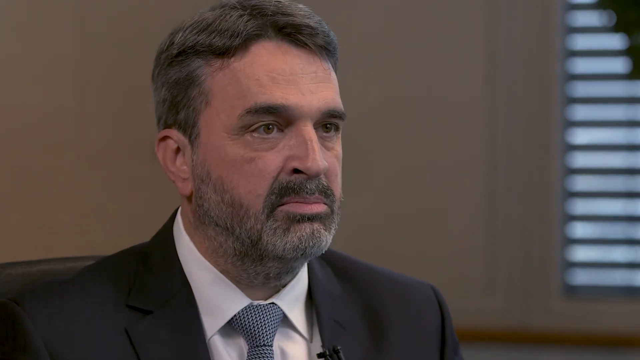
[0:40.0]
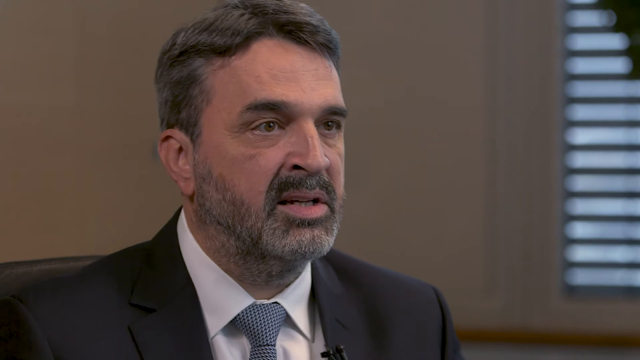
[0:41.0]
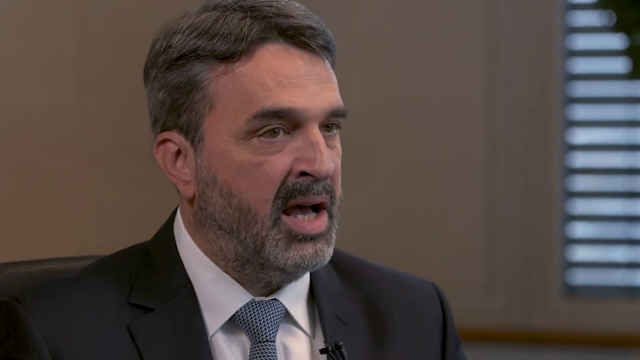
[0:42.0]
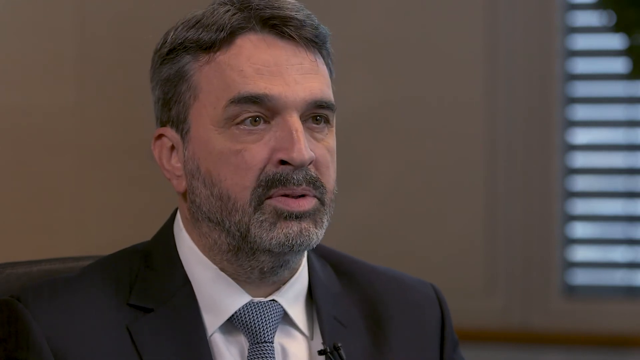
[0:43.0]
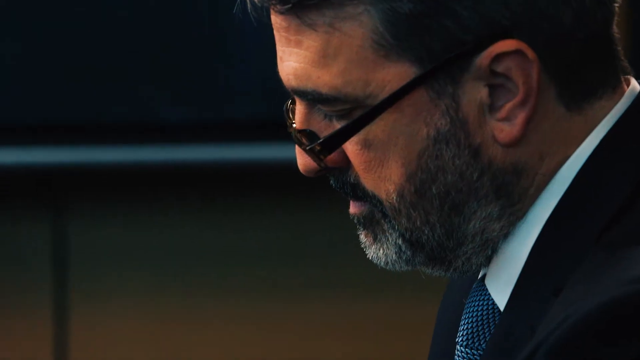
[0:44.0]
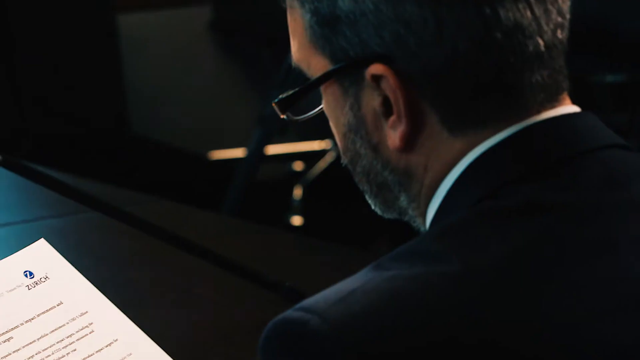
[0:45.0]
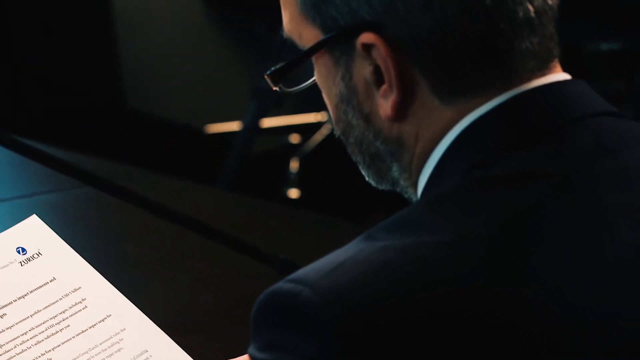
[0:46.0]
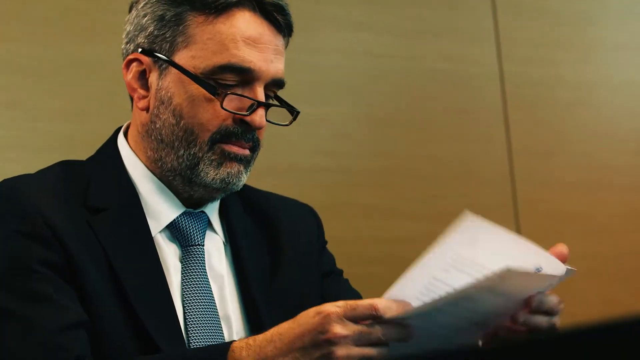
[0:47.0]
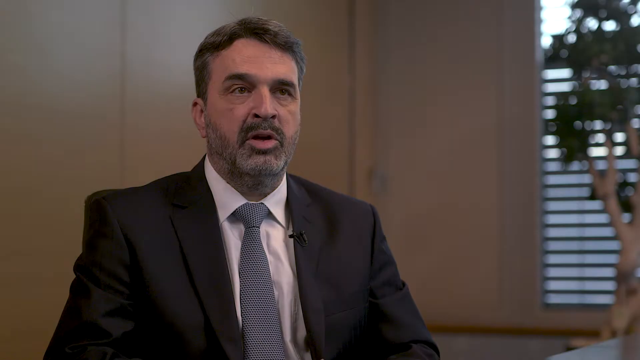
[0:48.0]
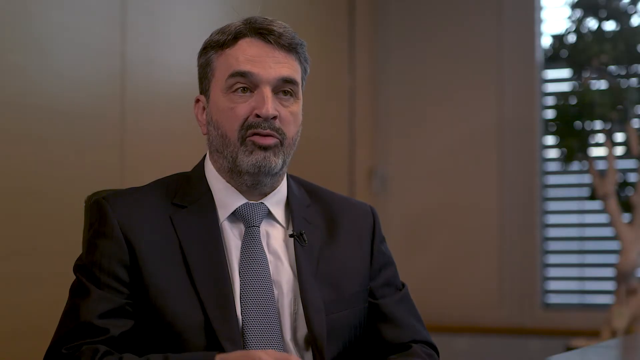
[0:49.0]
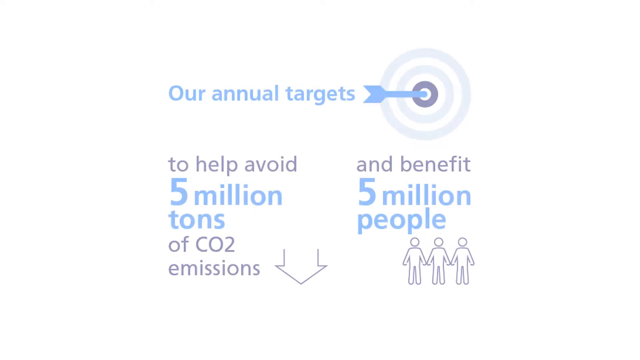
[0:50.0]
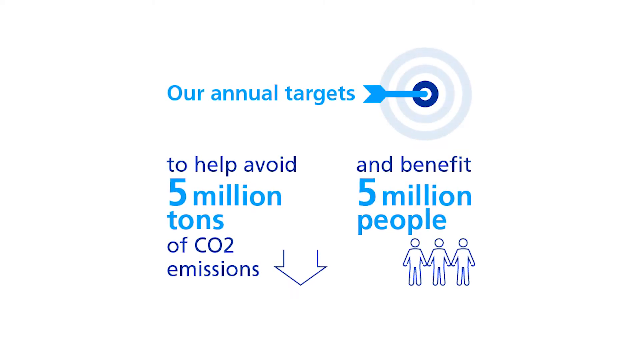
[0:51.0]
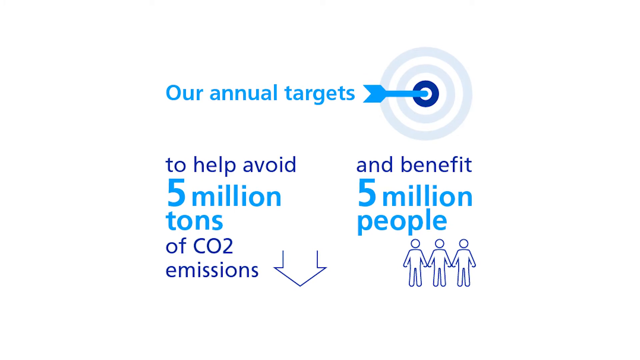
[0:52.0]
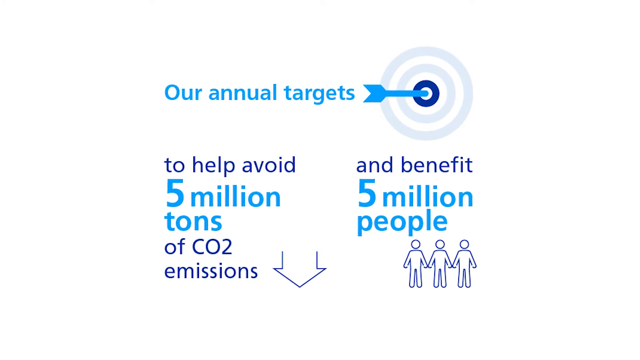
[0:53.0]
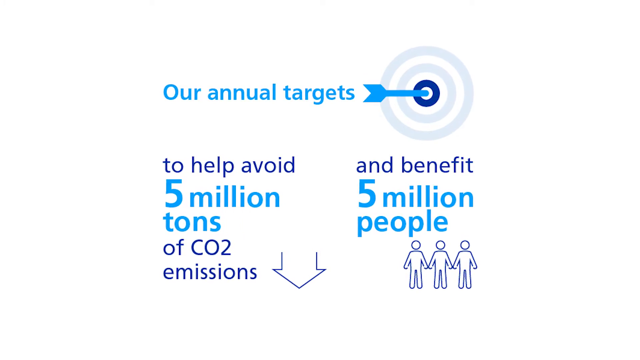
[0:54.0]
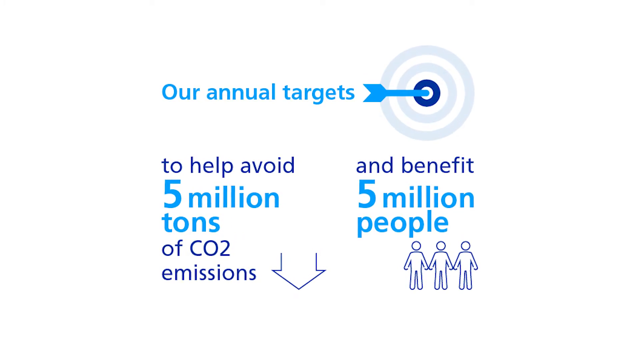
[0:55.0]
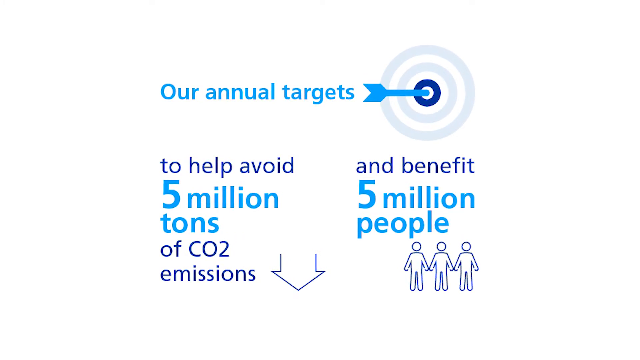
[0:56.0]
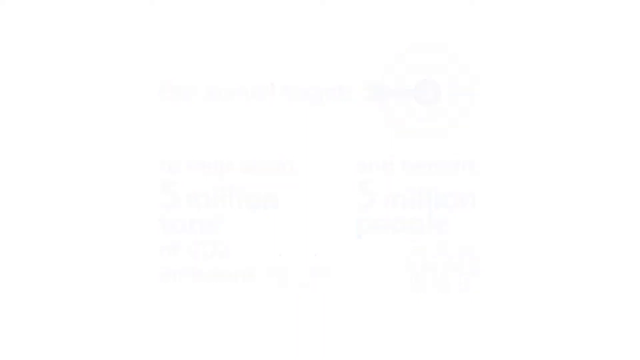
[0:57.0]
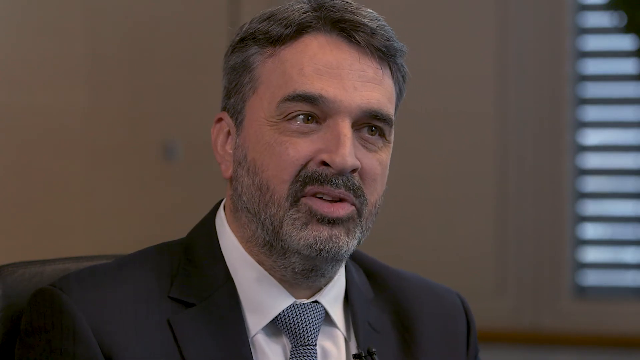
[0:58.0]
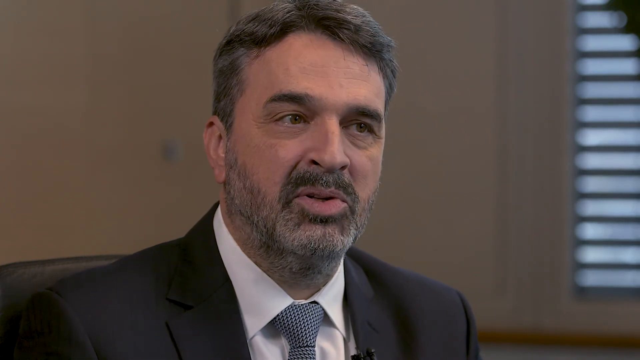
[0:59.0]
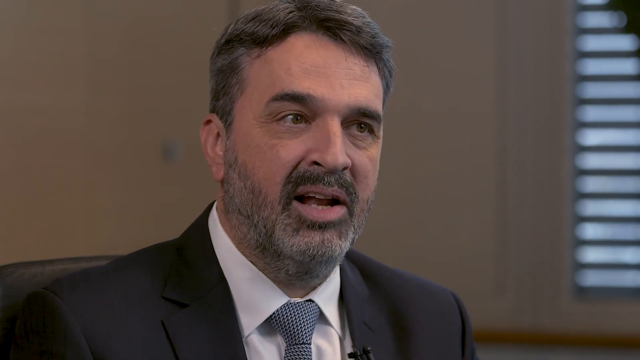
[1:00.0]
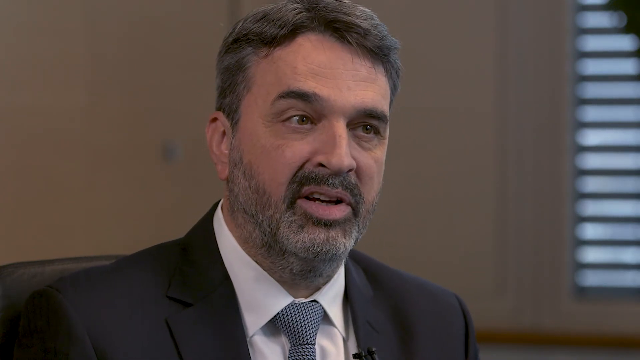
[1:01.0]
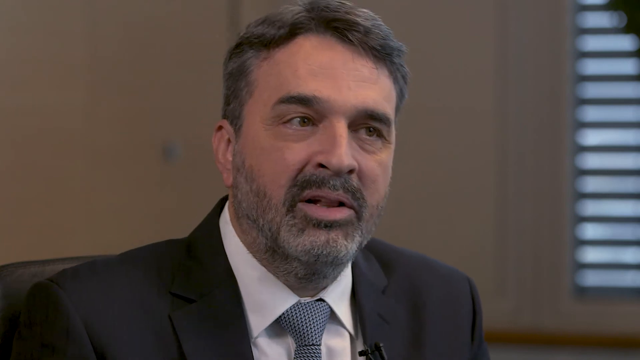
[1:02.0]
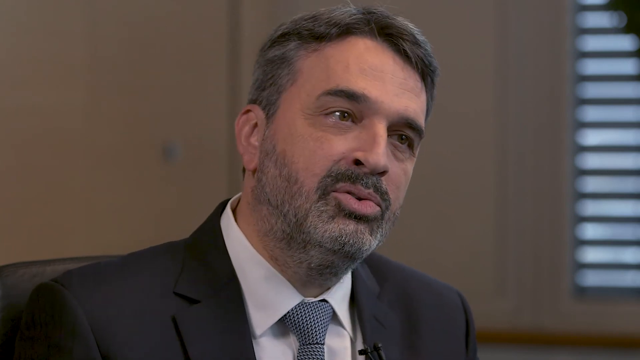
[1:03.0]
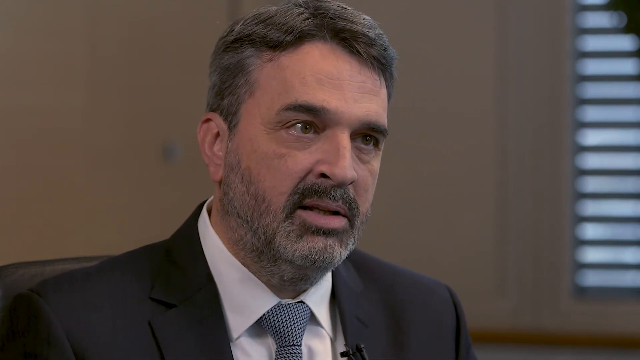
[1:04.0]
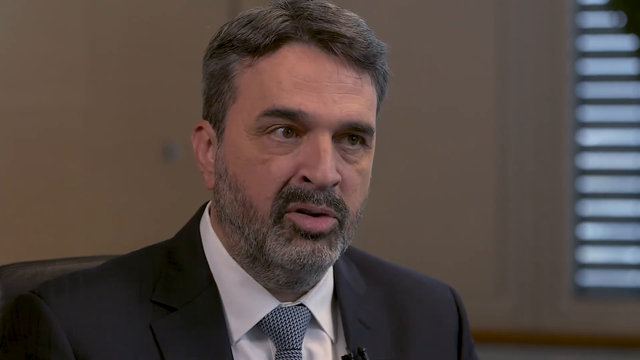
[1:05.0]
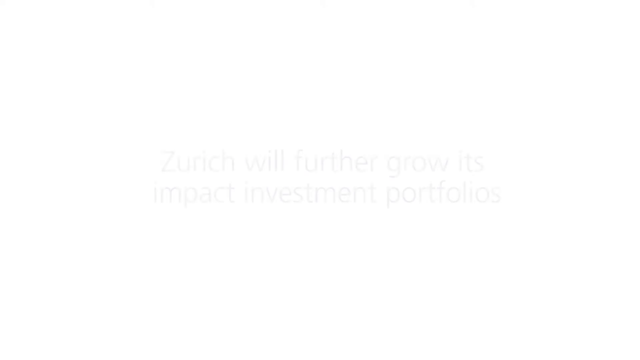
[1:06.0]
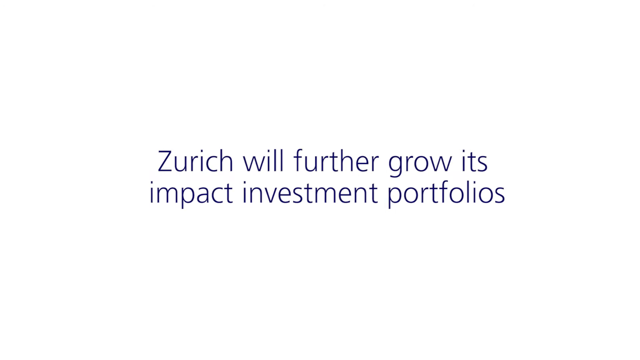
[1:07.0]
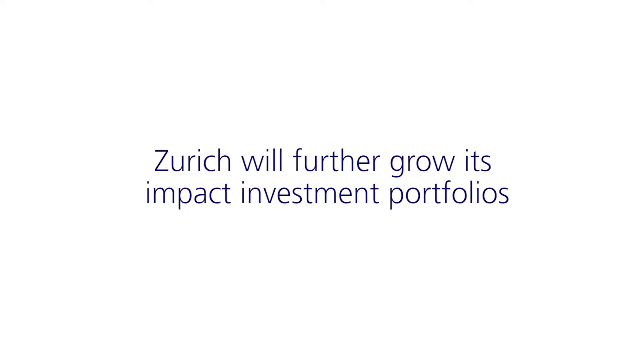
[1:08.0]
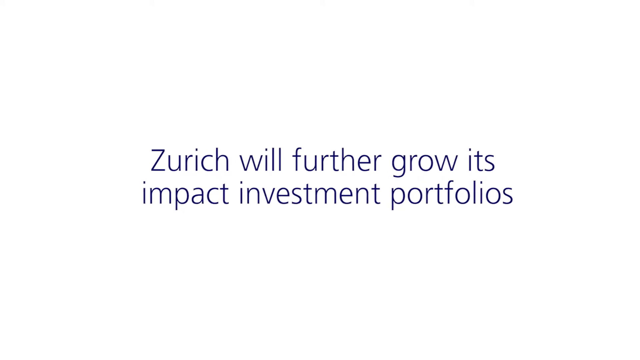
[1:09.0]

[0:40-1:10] The man continues speaking in his office. He appears like he could be the CEO or COO of a company. He has a serious look on his face and looks directly at the interviewer. He wears a white collared button-down shirt, a black and white tie, and what appears to be a charcoal gray suit. In a different scene he wears glasses and looks down, his head bent from the neck while the rest of his body is upright, apparently looking at some paperwork. Holding the papers in the palm of his left hand, he flips a paper over with his right hand; it may have a staple in the upper left corner. The scene changes again to him talking to the interviewer. Then a graphic appears reading "our annual targets", with an image of a light blue and dark blue target and a turquoise arrow pointed at its middle. Beneath this is "to help avoid five million tons of CO2 emission", and to the right "and benefit five million people", with stick figures of three people standing side by side. In the middle there is an arrow pointing downwards. Next, the man is speaking to the interviewer again, seemingly tilting his head slightly to the left, as if giving a heartfelt talk. The scene then changes to "Zurich will further grow its impact investment portfolios".